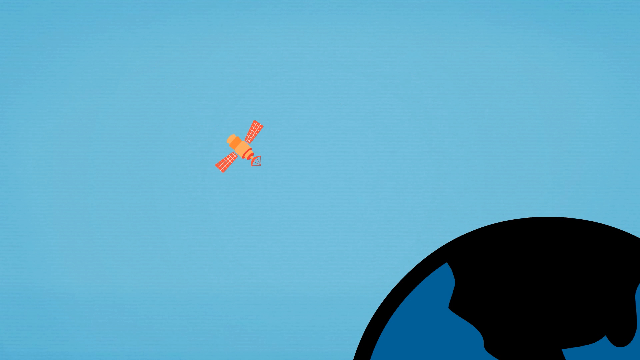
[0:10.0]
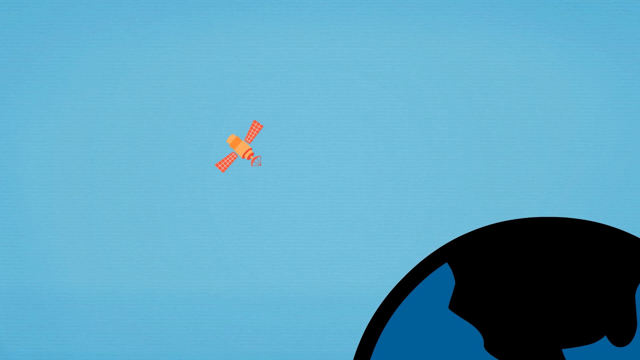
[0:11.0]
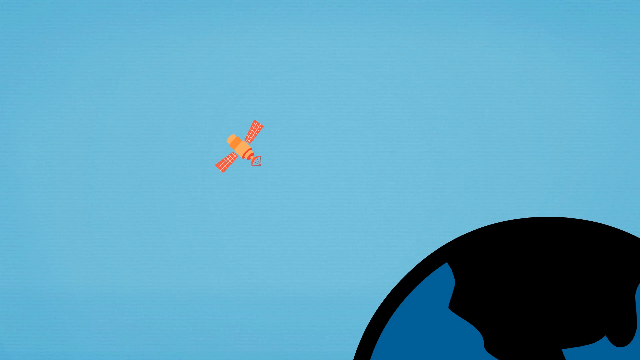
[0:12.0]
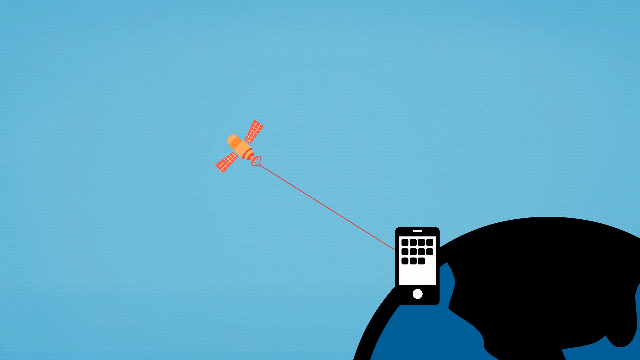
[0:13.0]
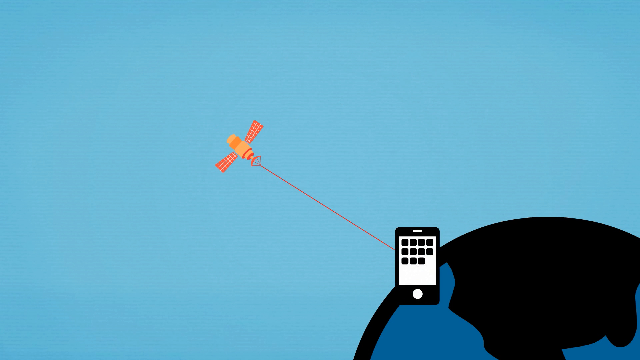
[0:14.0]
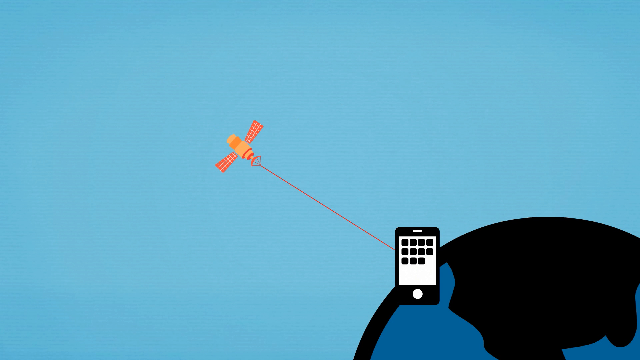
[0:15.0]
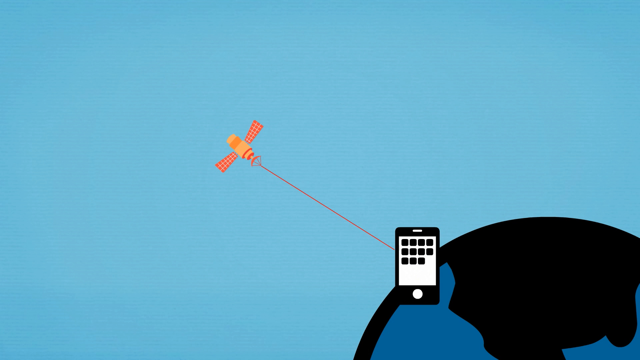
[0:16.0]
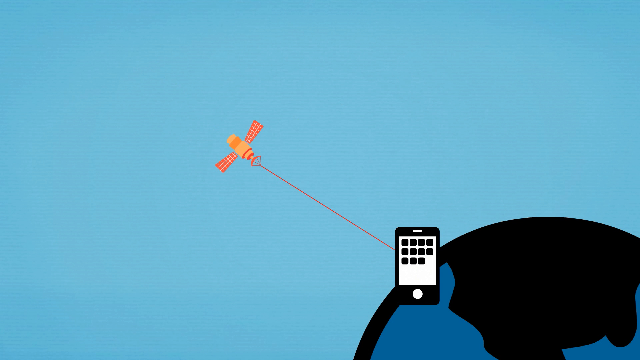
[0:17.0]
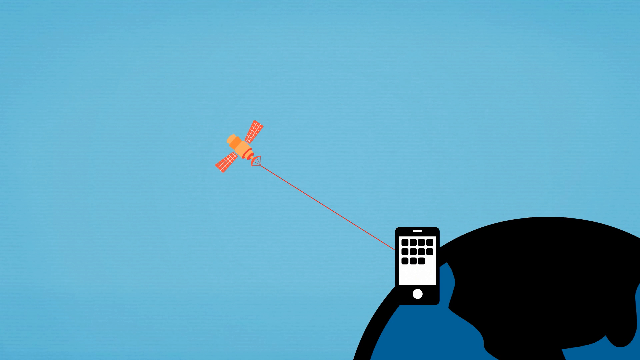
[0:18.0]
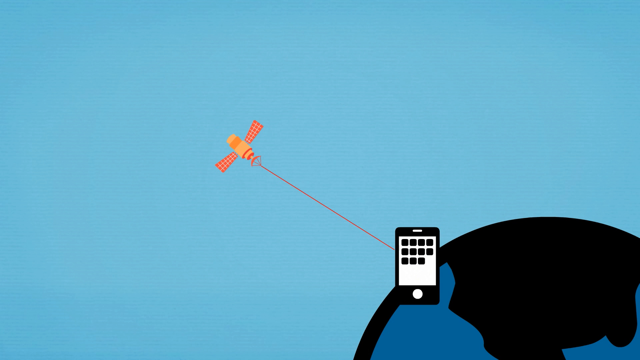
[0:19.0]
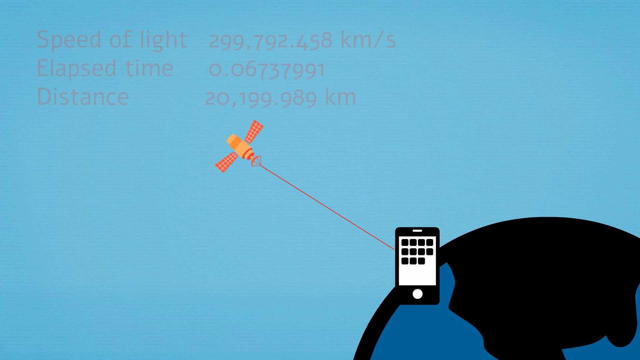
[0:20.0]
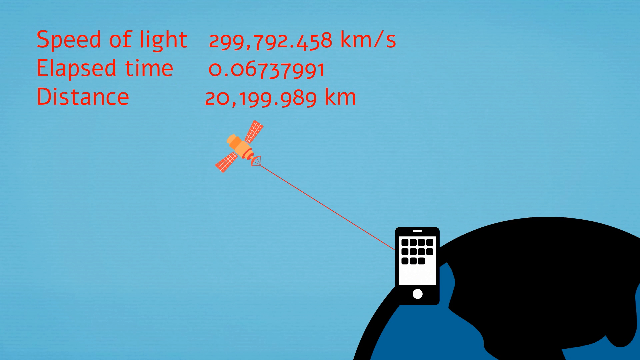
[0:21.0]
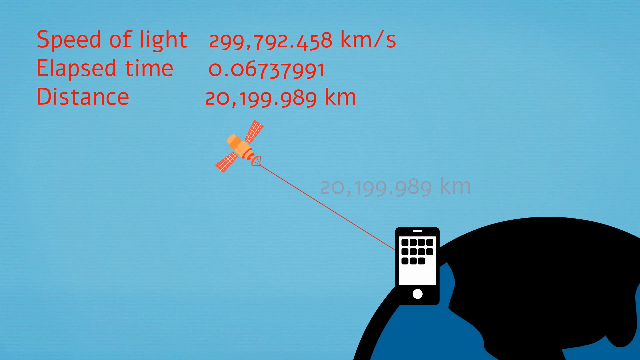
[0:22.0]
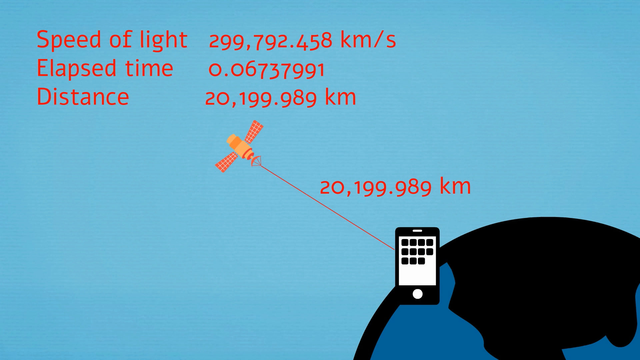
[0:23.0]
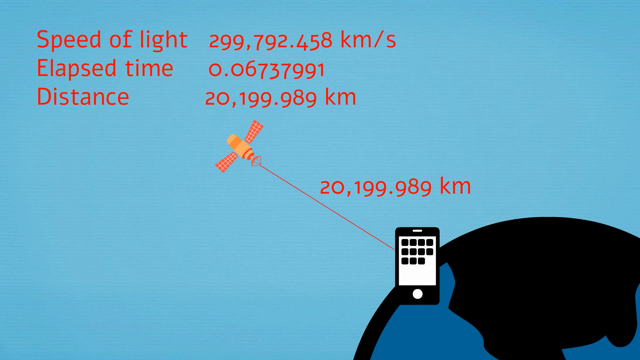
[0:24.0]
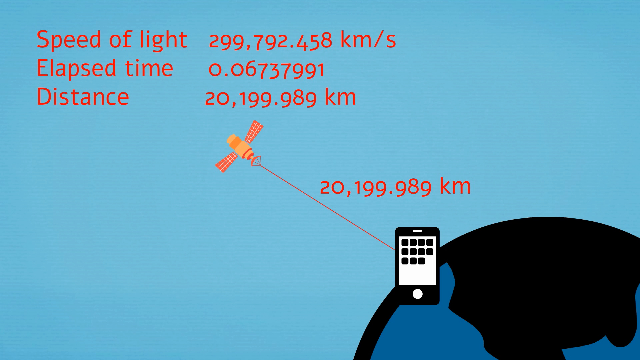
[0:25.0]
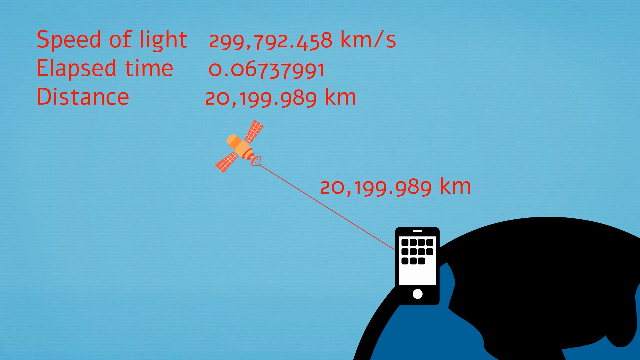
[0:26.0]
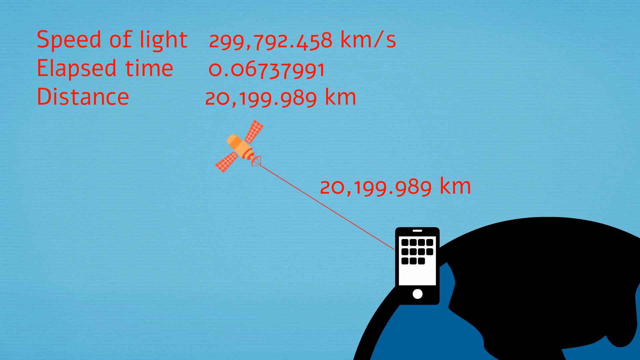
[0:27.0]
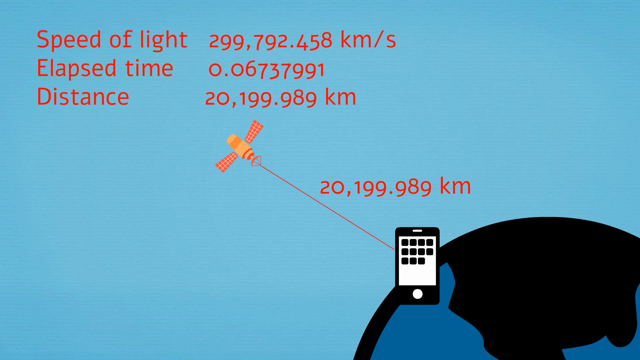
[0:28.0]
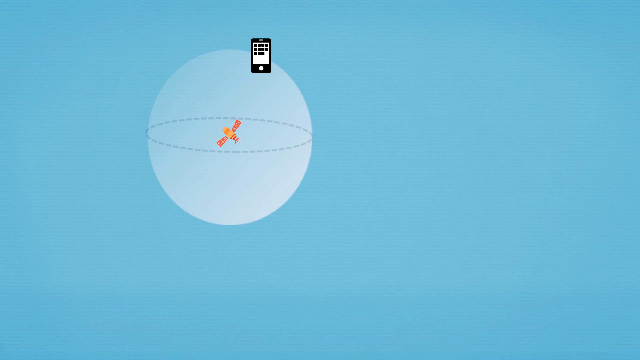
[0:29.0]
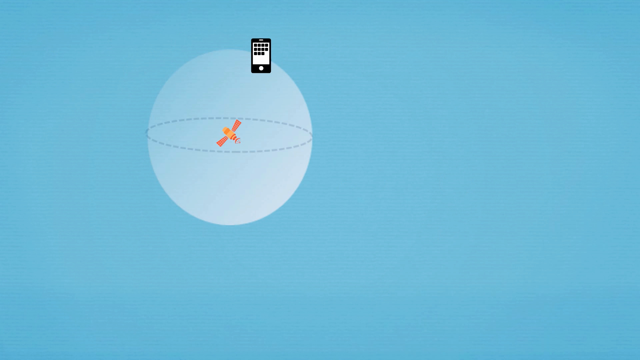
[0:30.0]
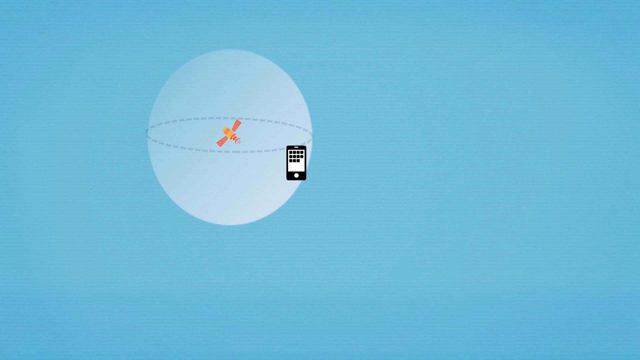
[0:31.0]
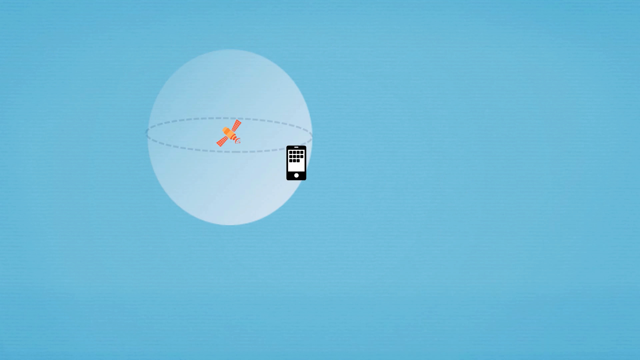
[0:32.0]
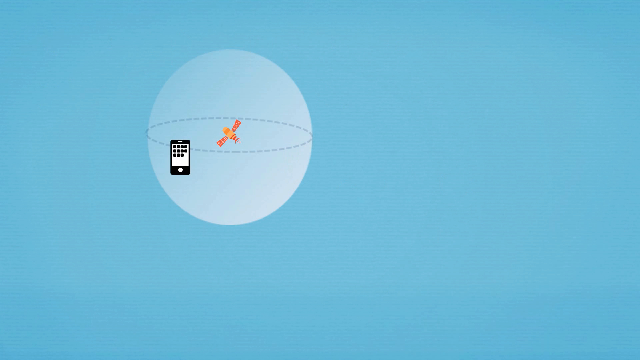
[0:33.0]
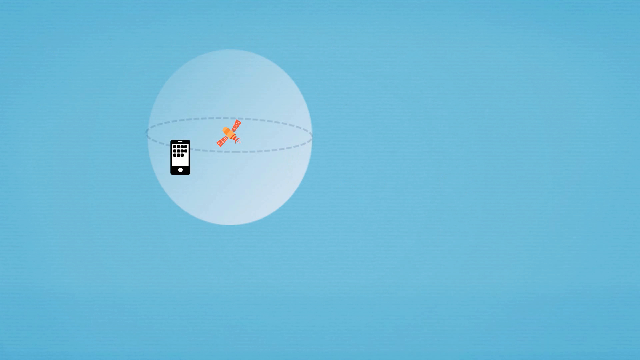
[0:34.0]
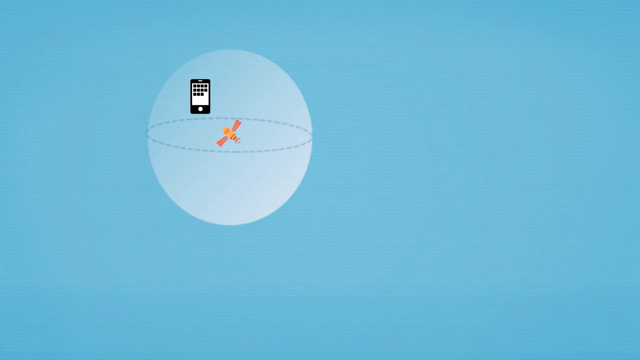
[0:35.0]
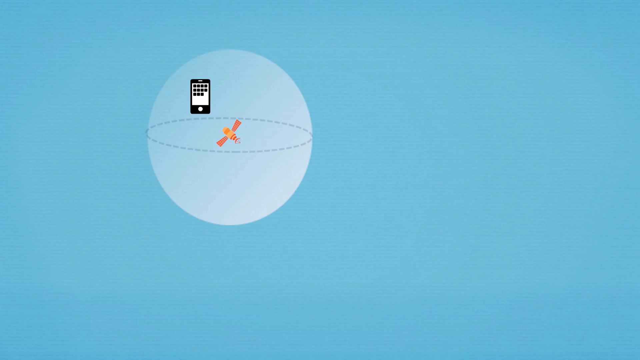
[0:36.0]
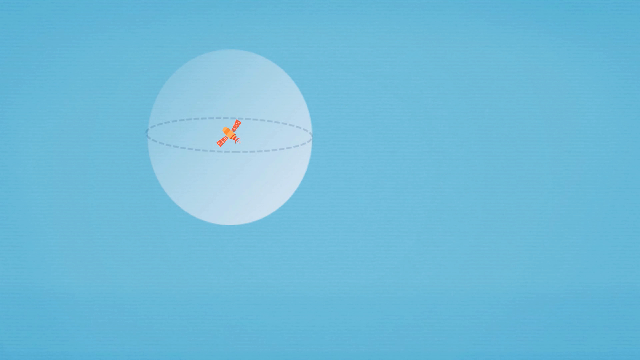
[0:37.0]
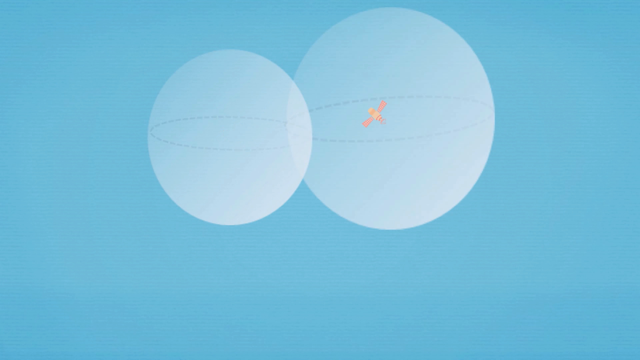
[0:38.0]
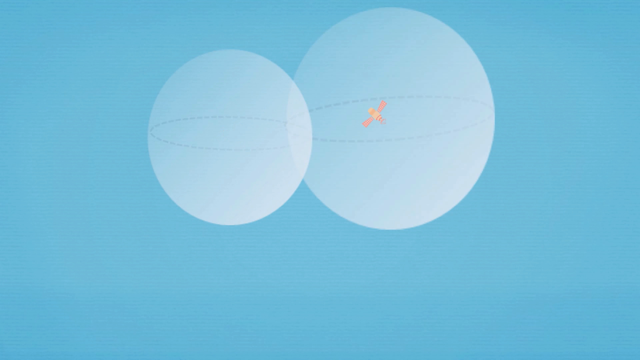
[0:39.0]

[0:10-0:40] A blue screen shows what looks like half of a black planet at the bottom right and what looks like an orange satellite in the middle, resembling a bee with wings. Suddenly a red tail attaches to the planet, and where it attaches, what looks like an iPhone appears. After a few seconds, orange text appears at the top left of the screen about the speed of light, the elapsed time, and the distance from the satellite to the phone. Then orange text pops up near the phone giving how many kilometers it is from the satellite to the phone. Suddenly the picture changes to a page with a light blue background showing a round, white, see-through sphere with dashes in the middle, resembling a course for a satellite, surrounding the sphere. The phone image moves down to the lower part of the sphere under the satellite, then to the left of the sphere to the left of the satellite, then back up to the top of the sphere above the satellite. The animation then shows a larger white sphere to the right of the other sphere, with the orange satellite in the middle of this larger sphere.